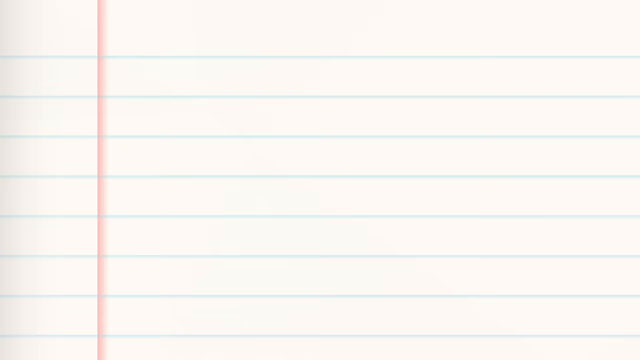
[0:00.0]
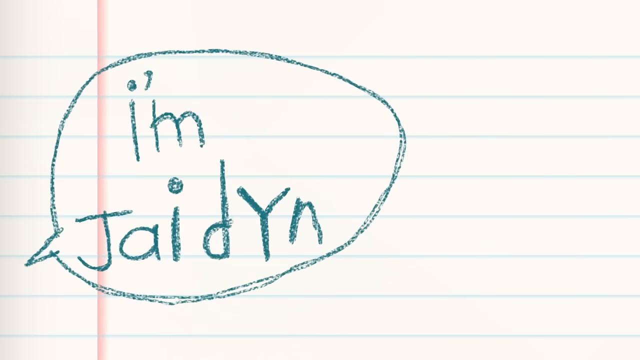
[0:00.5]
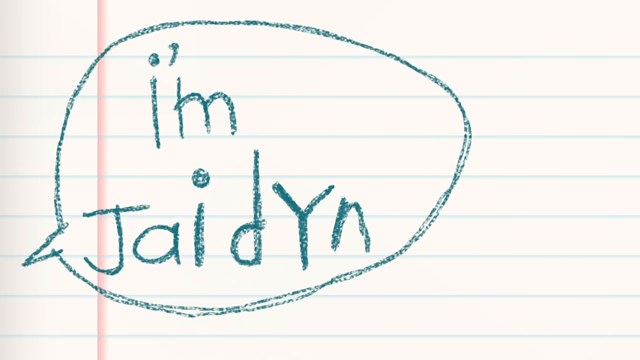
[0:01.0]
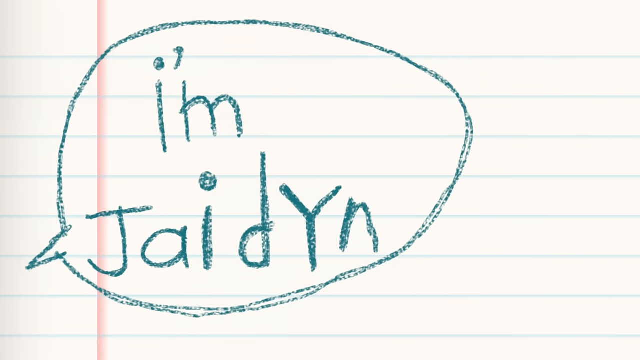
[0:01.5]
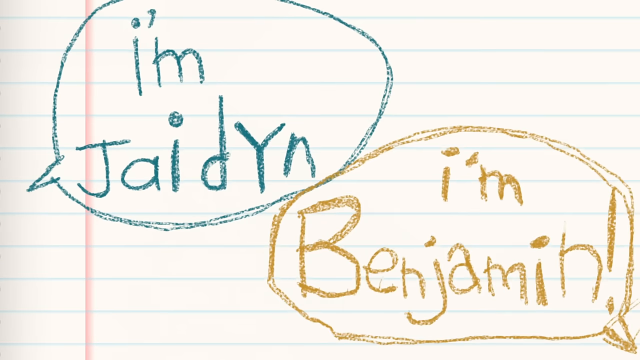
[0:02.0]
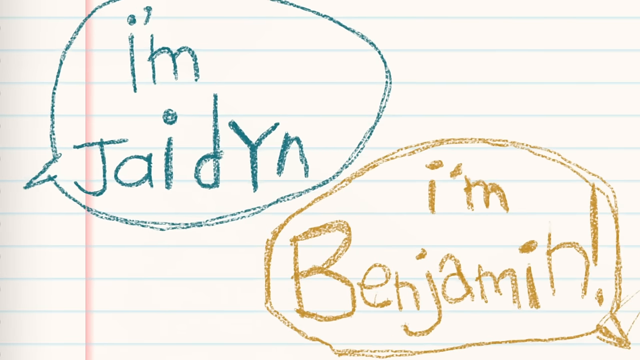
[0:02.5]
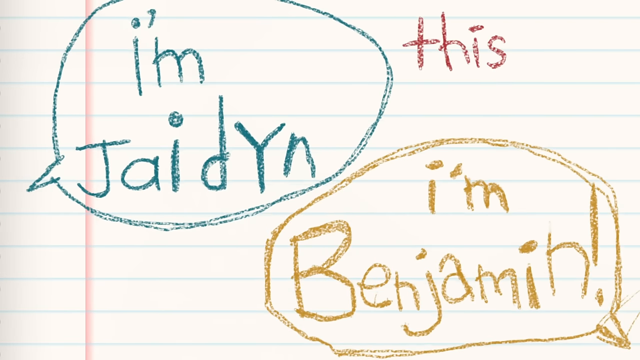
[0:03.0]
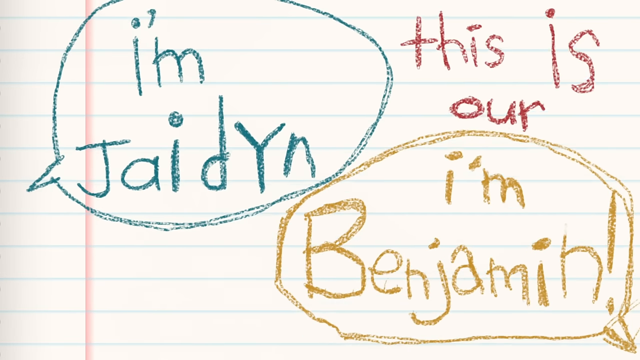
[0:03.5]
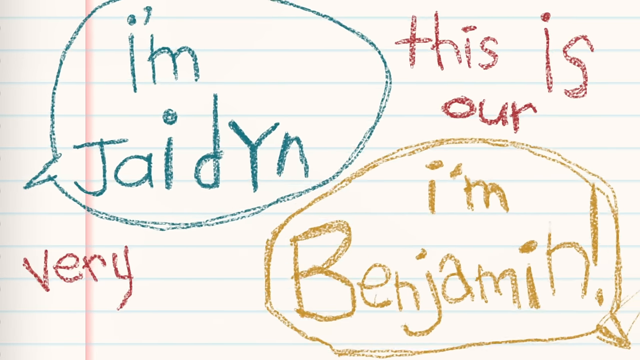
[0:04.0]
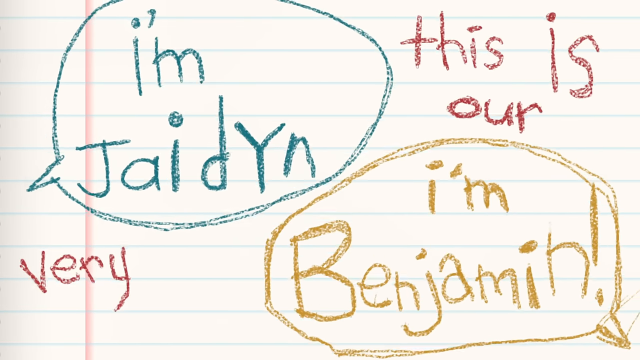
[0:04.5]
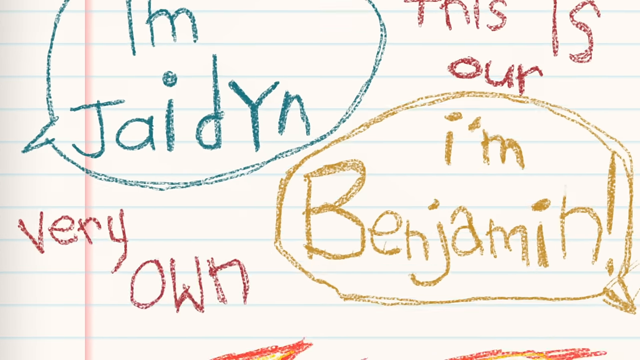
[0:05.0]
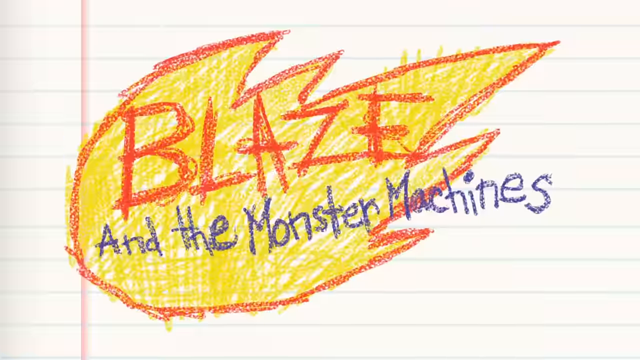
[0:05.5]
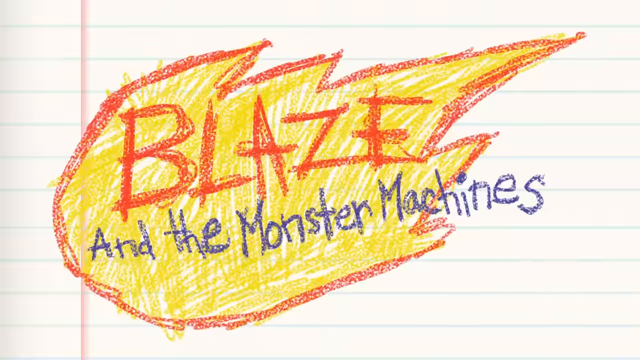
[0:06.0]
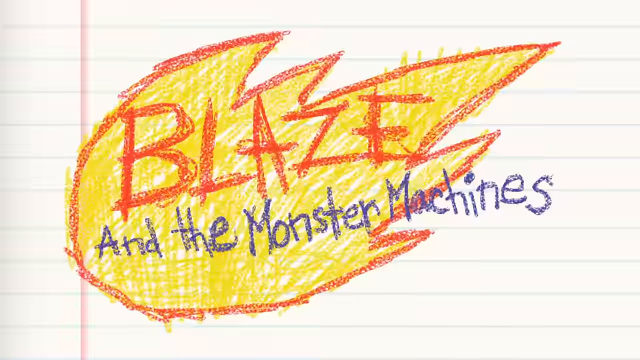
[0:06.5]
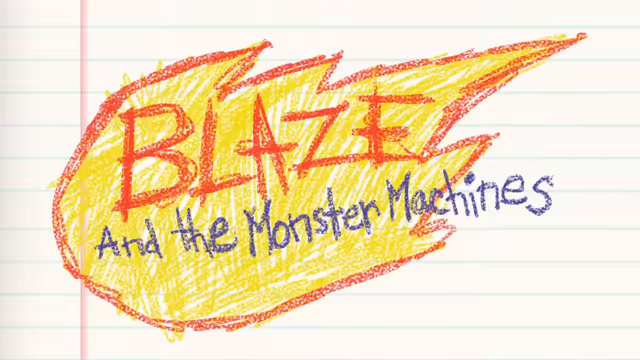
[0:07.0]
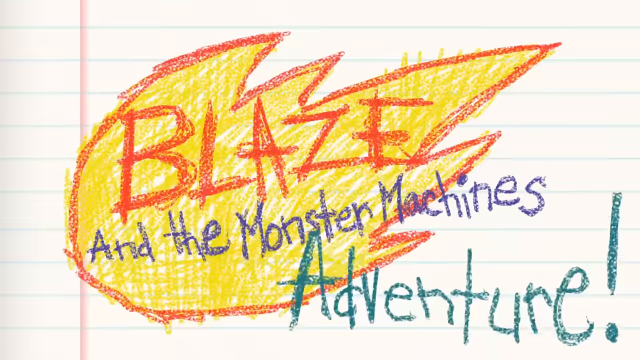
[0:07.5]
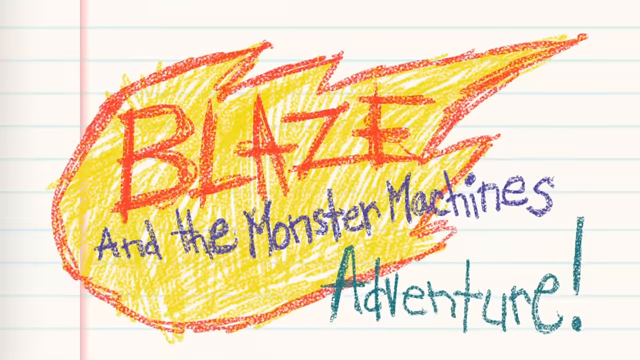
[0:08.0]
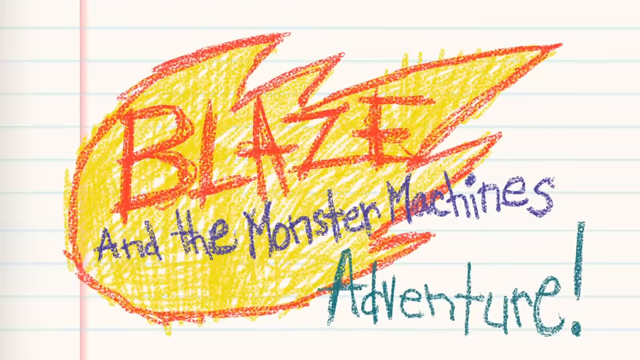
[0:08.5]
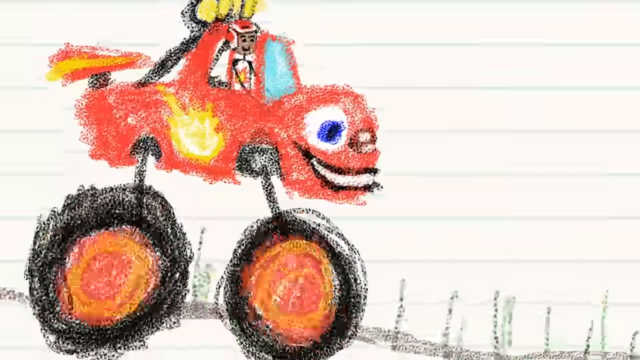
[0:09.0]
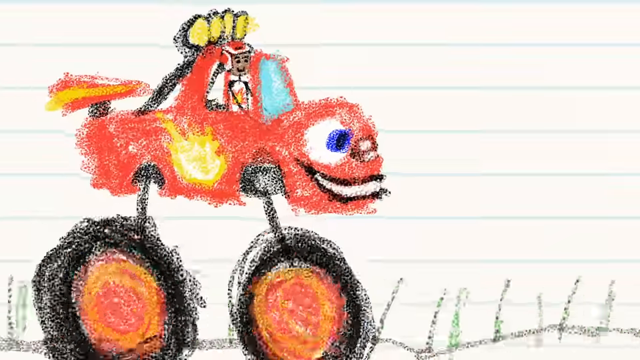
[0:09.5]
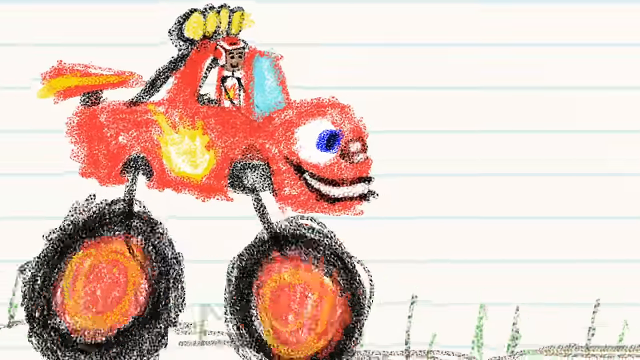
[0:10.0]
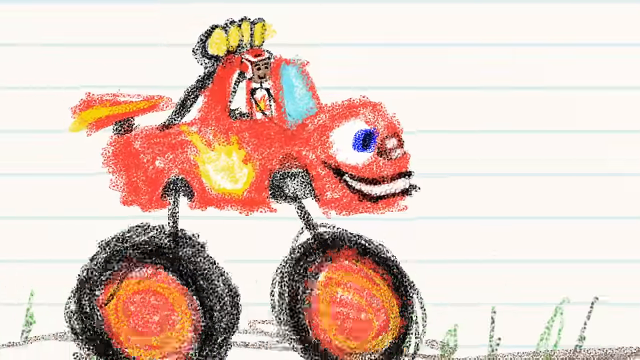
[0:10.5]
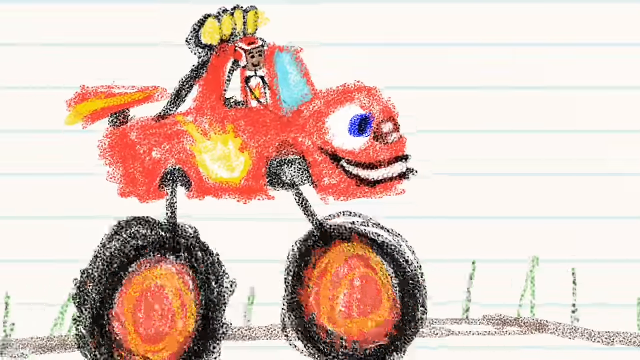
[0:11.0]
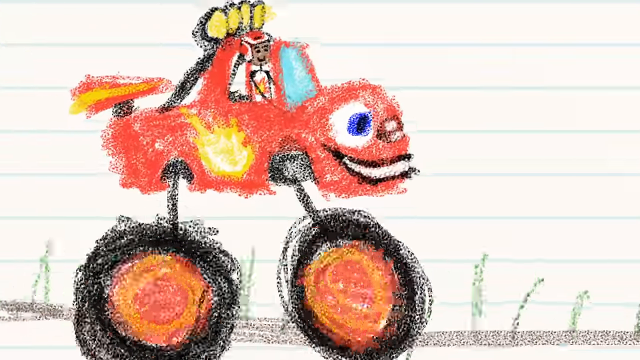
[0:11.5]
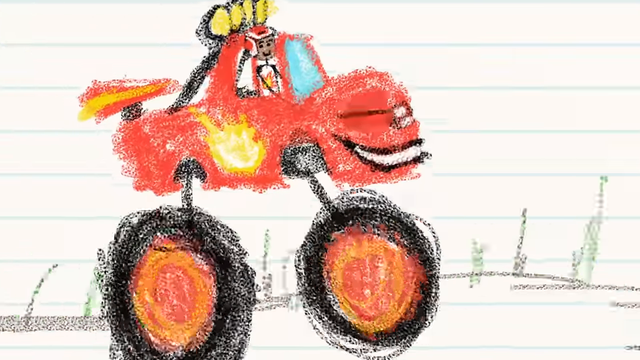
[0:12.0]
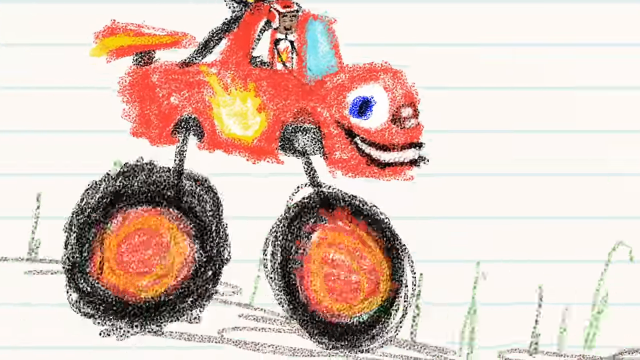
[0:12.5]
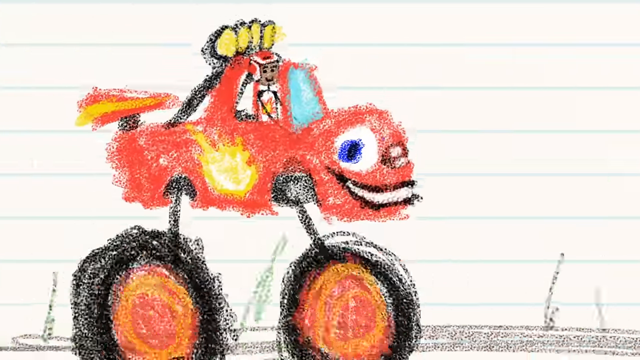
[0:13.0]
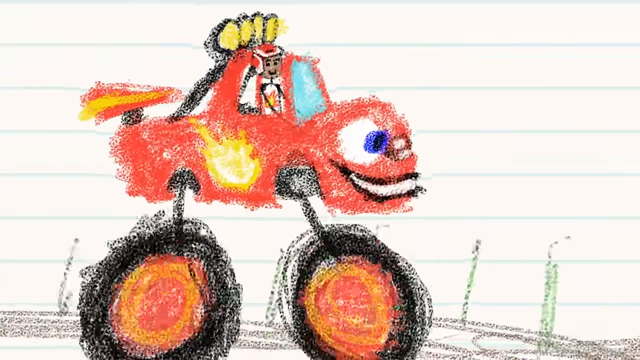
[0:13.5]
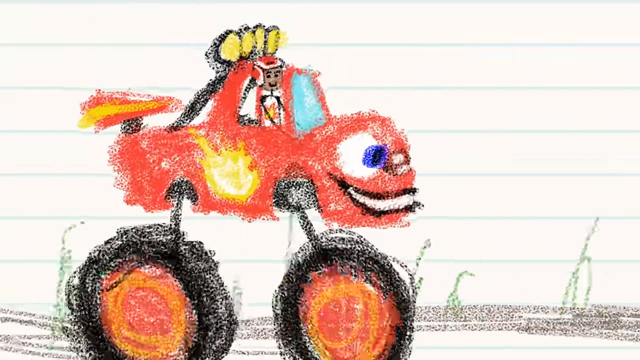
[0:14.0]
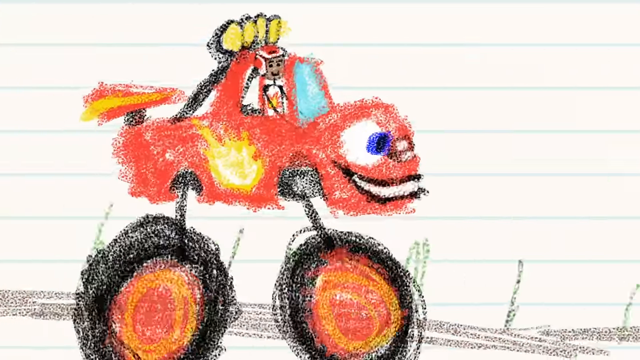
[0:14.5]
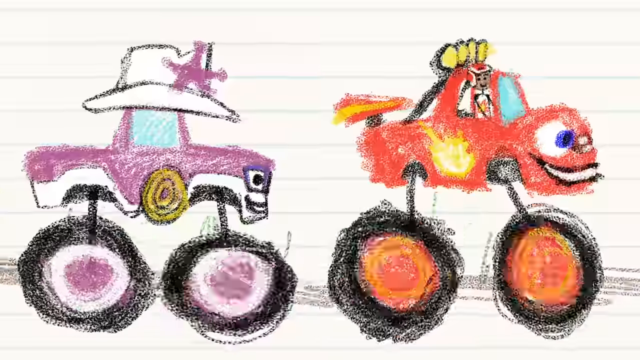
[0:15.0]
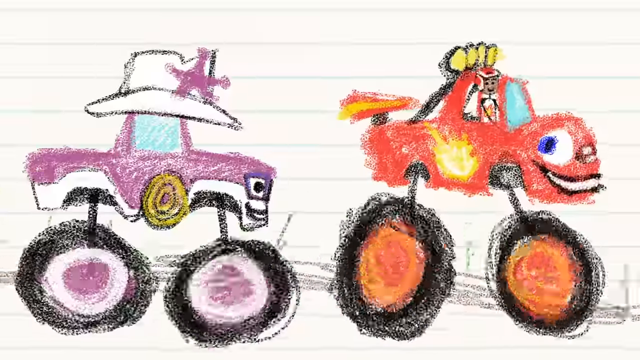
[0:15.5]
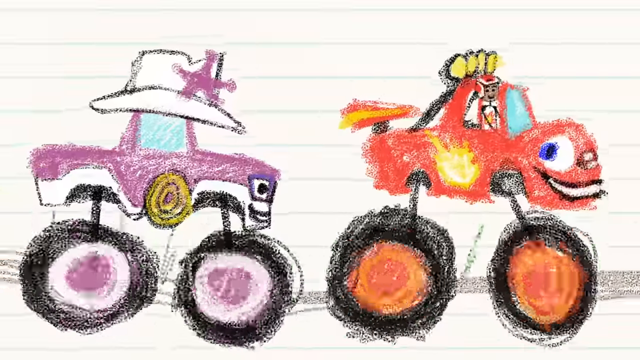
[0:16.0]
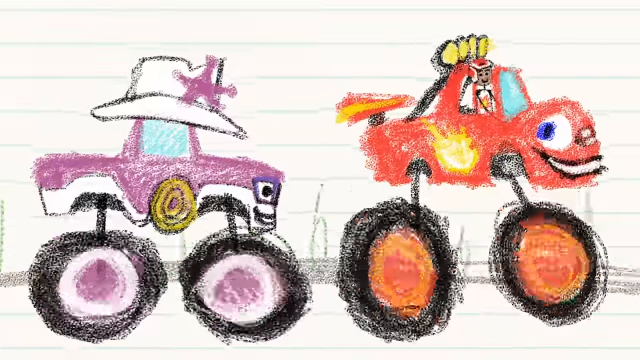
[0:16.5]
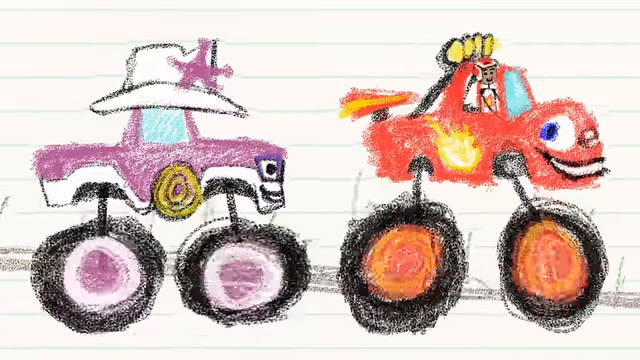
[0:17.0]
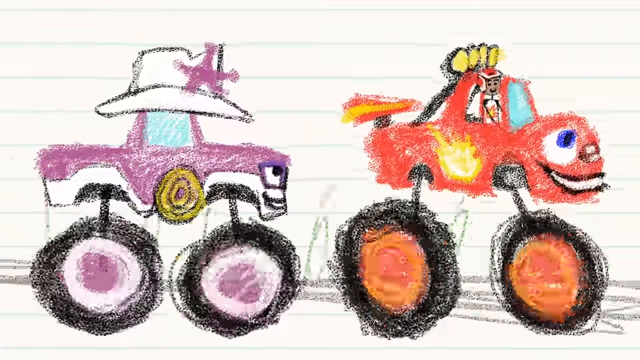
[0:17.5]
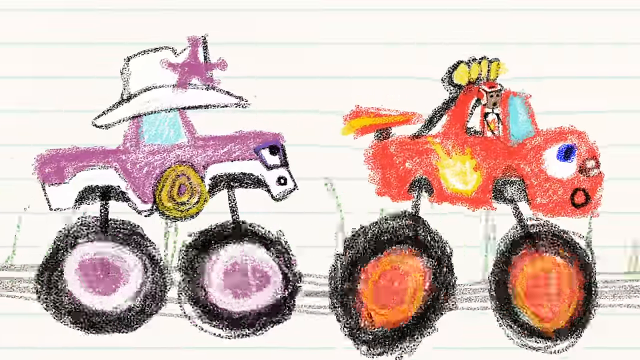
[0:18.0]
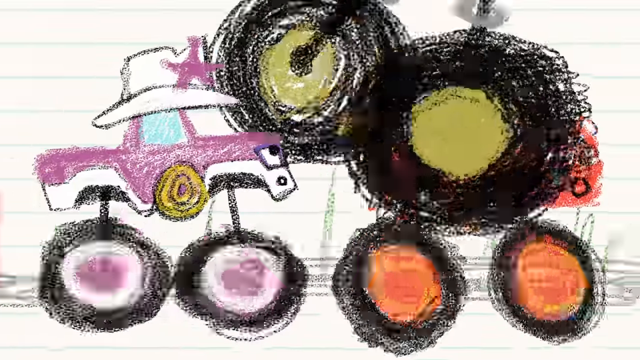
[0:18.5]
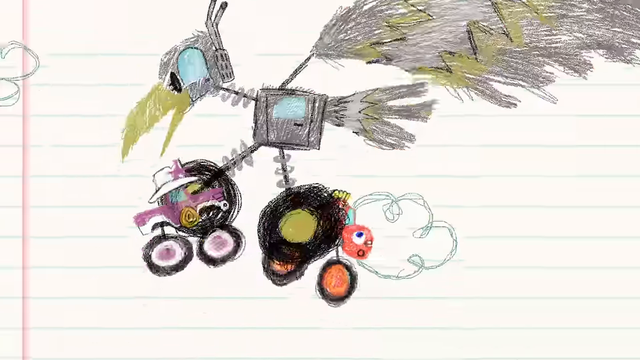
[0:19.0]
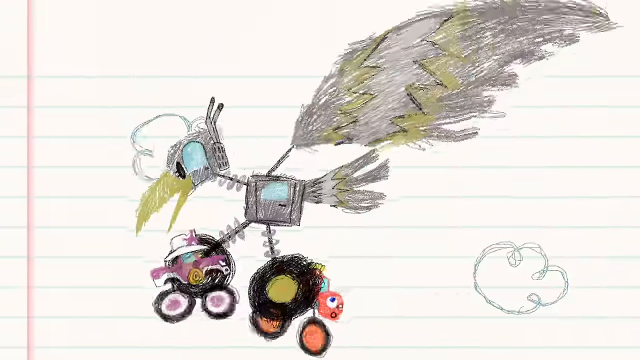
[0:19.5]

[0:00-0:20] This animated Nick Jr. video, Blaze and the Crayon Adventure, opens with text reading "hi, I'm Jaden. I'm Benjamin. This is our very own Blaze and the Monster Machines Adventure." Everything is done in crayon. Two cars, a red one and a purple one, drive along; one has a sheriff's hat on it and the other has lights on its top. As they drive, a mechanical bird picks up both cars and flies away with them in its talons. The background is lined notebook paper, and as the bird flies, clouds are drawn at the top of the notebook paper to show that the cars are being carried up into the sky.